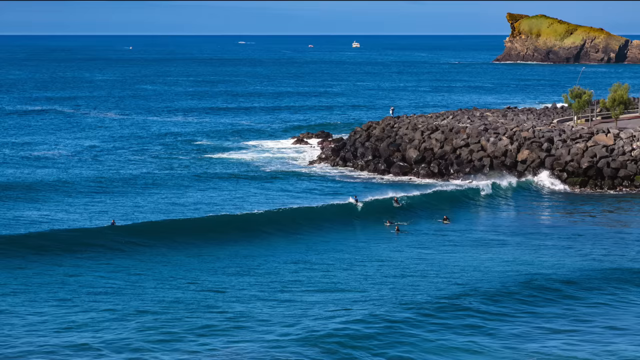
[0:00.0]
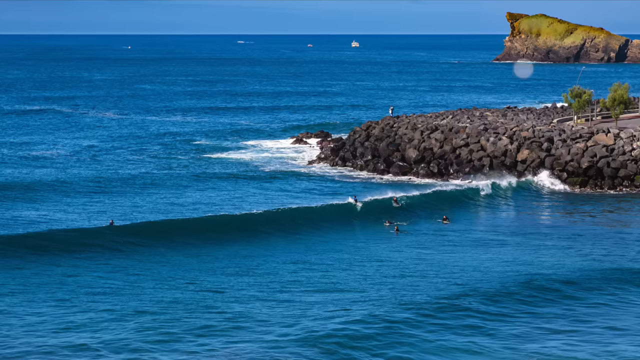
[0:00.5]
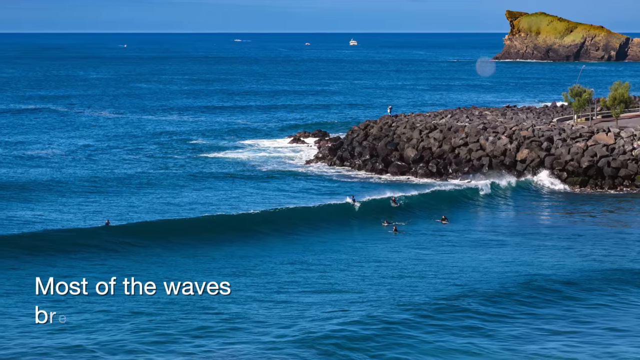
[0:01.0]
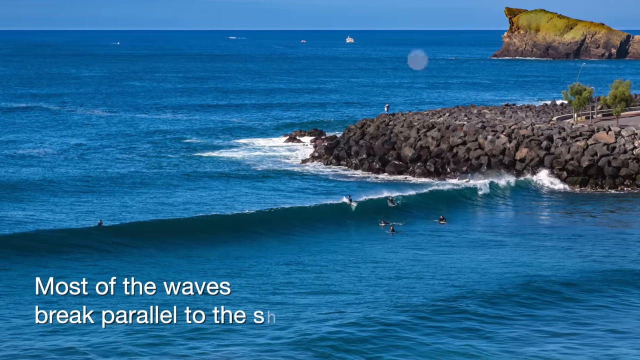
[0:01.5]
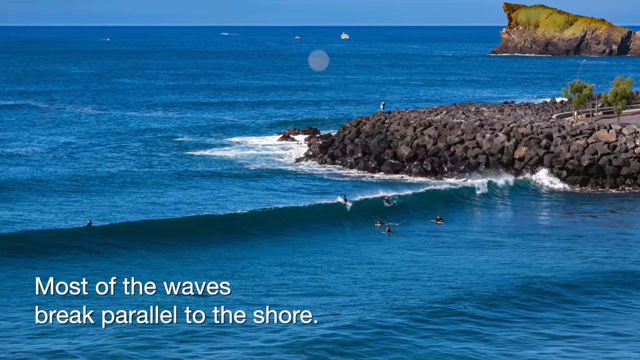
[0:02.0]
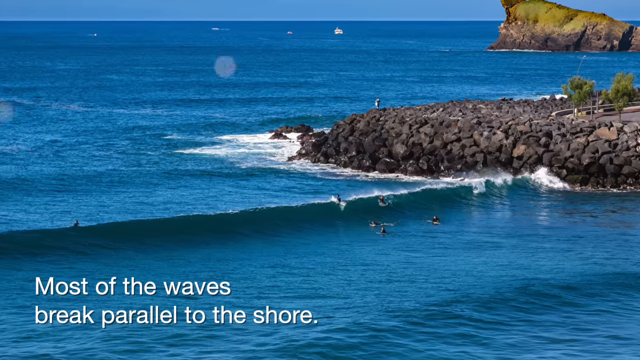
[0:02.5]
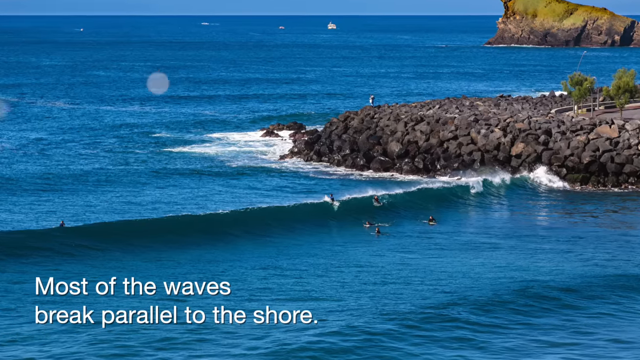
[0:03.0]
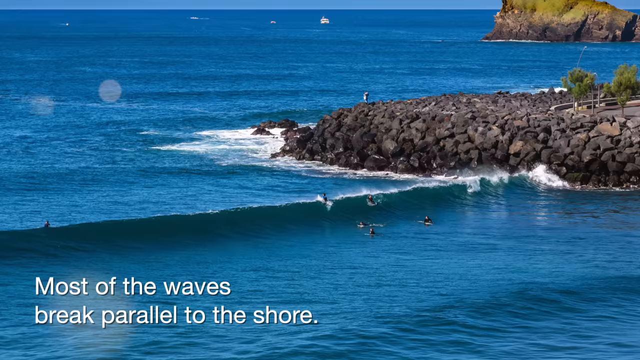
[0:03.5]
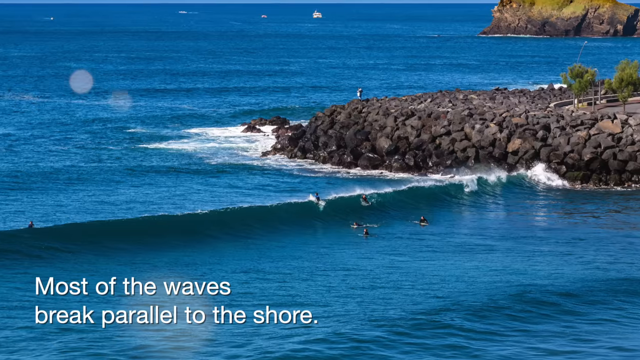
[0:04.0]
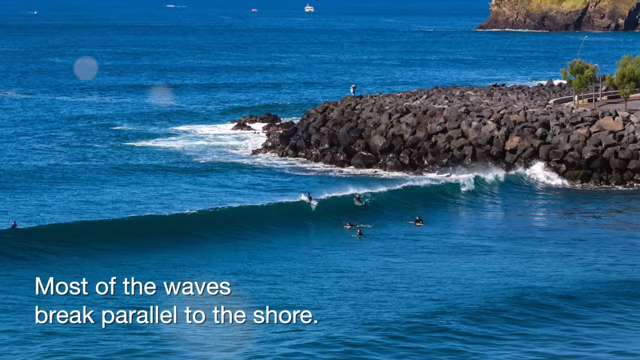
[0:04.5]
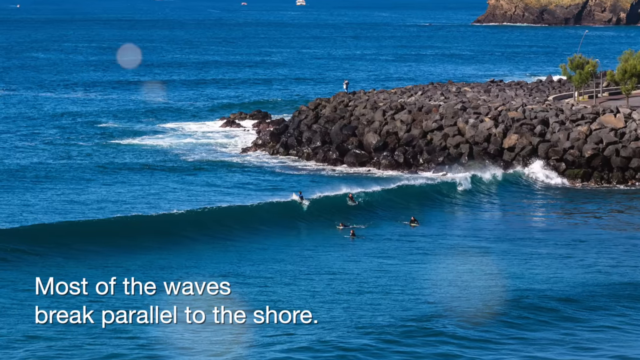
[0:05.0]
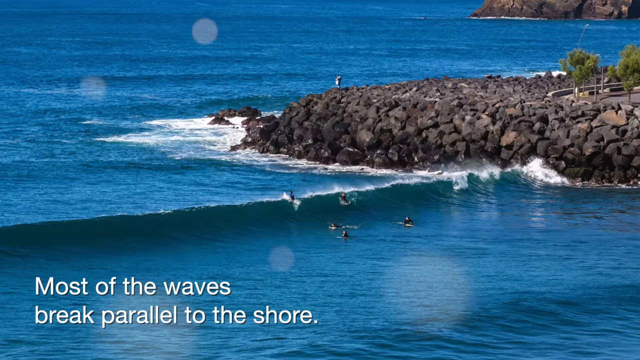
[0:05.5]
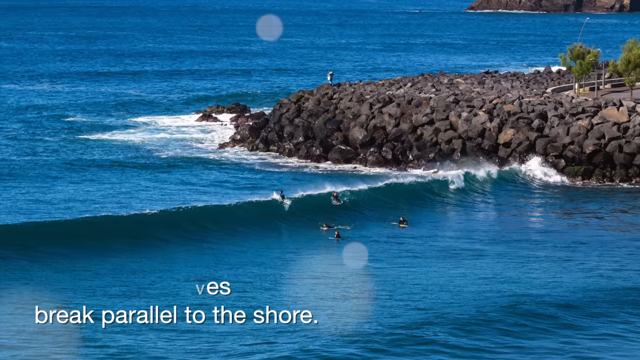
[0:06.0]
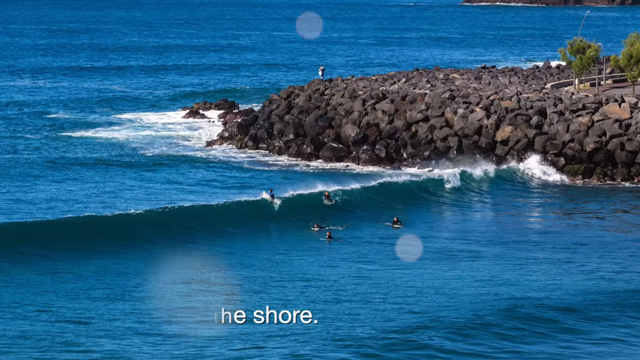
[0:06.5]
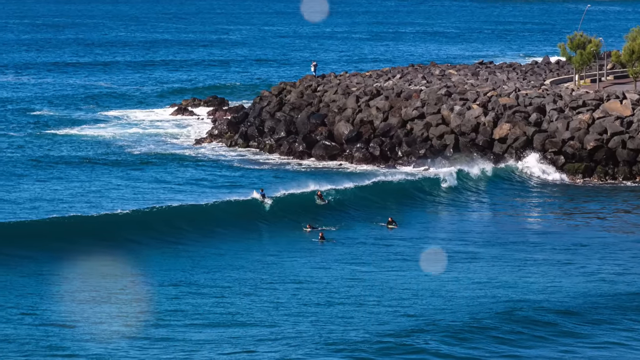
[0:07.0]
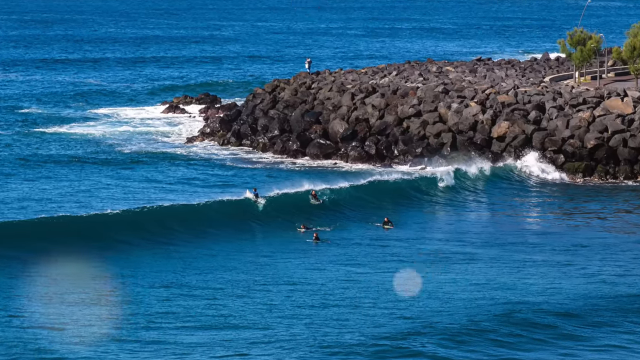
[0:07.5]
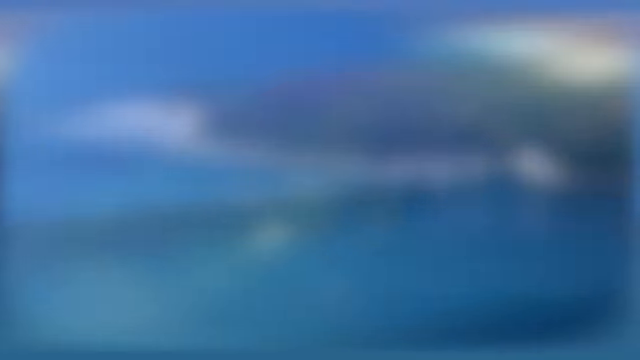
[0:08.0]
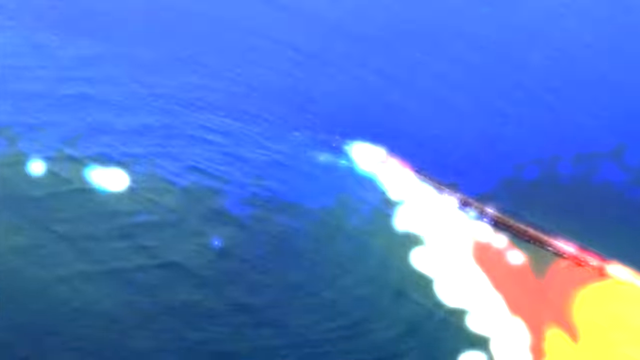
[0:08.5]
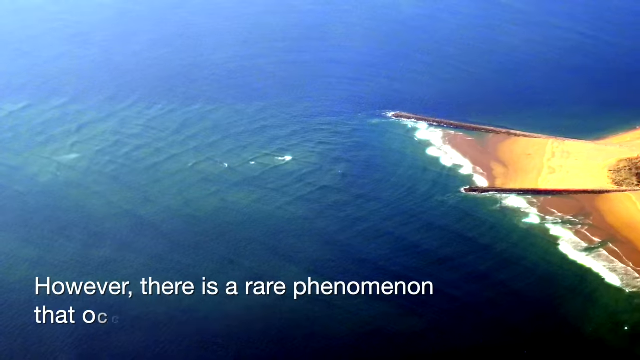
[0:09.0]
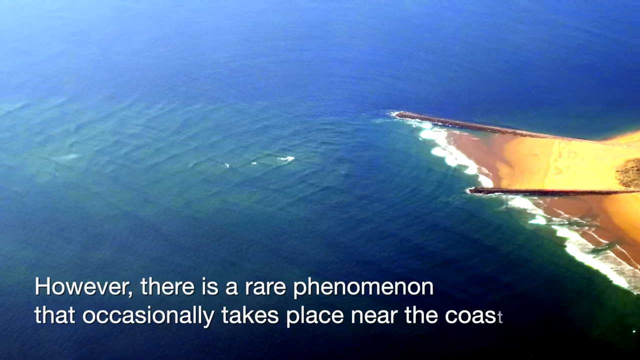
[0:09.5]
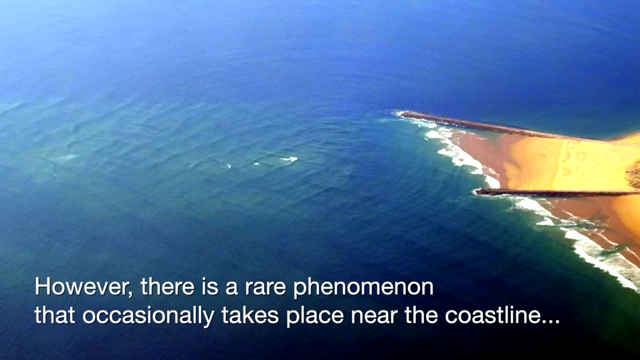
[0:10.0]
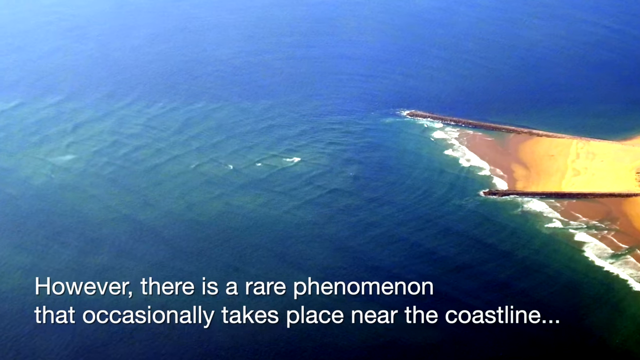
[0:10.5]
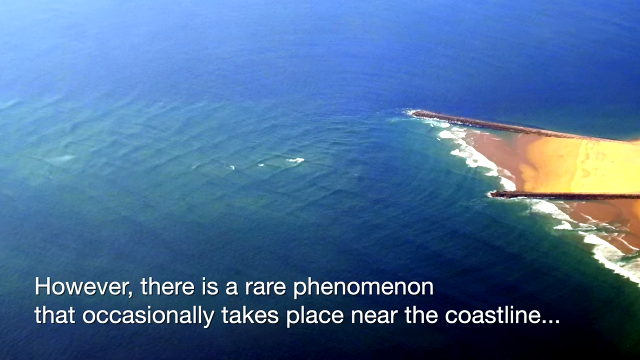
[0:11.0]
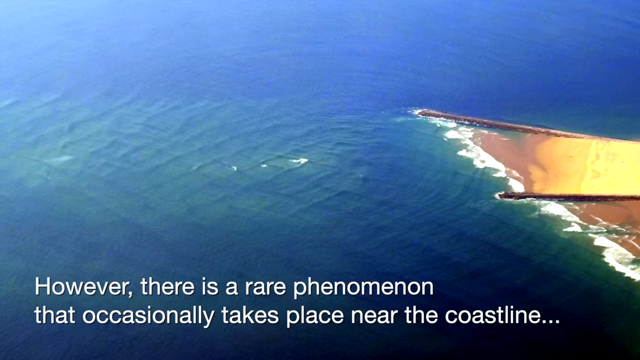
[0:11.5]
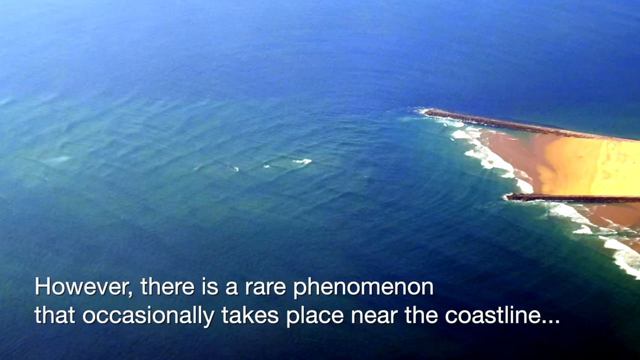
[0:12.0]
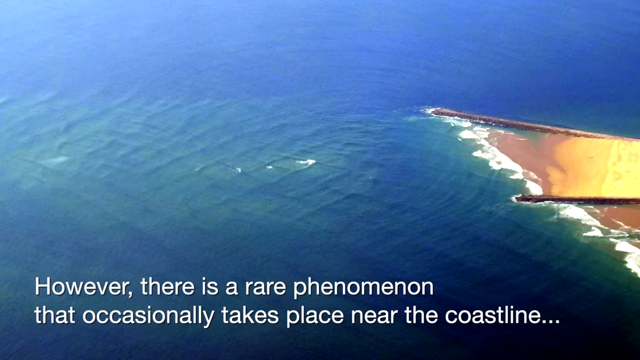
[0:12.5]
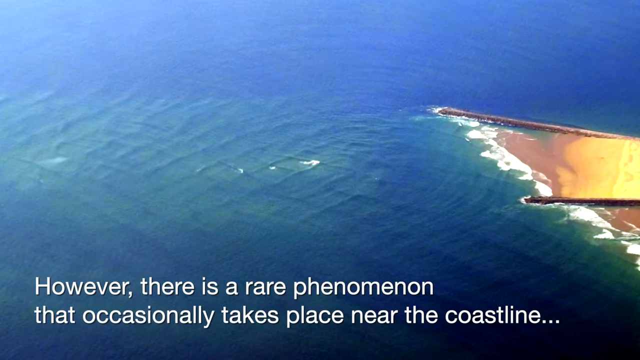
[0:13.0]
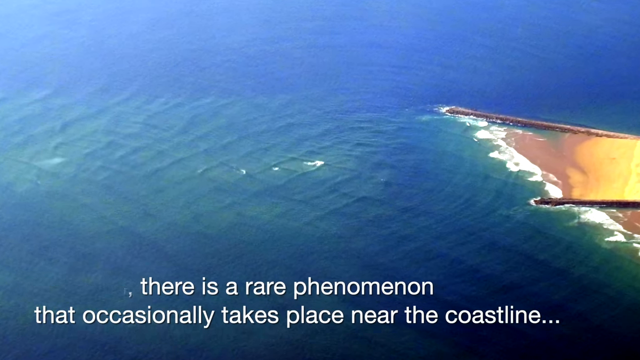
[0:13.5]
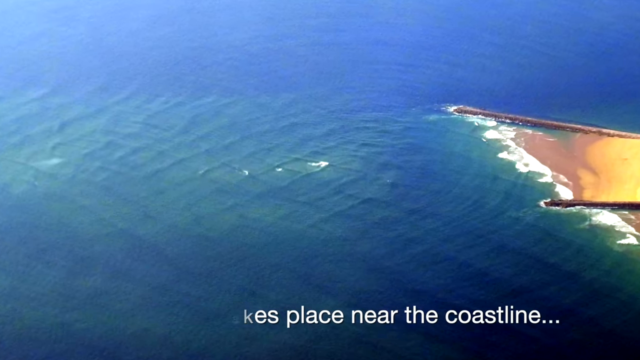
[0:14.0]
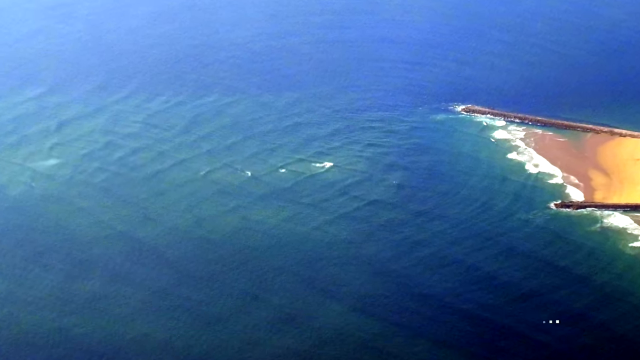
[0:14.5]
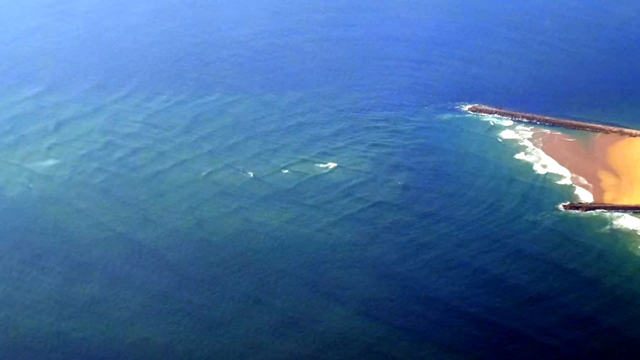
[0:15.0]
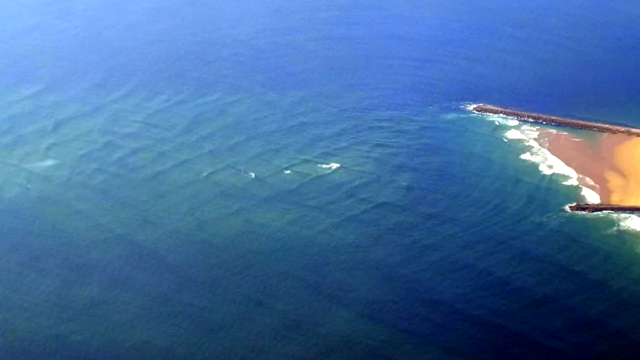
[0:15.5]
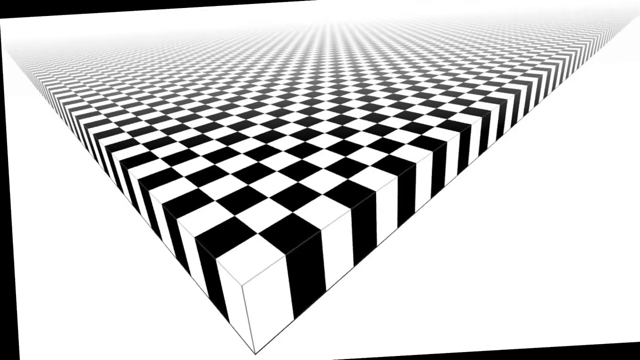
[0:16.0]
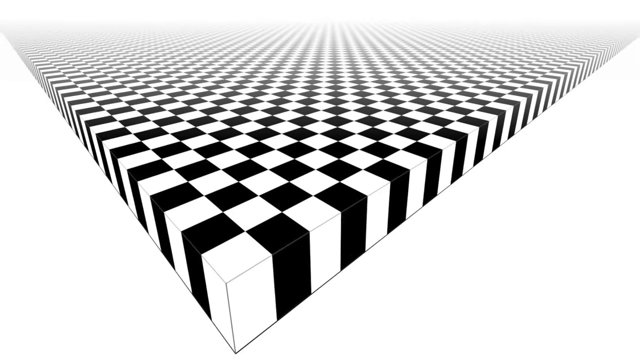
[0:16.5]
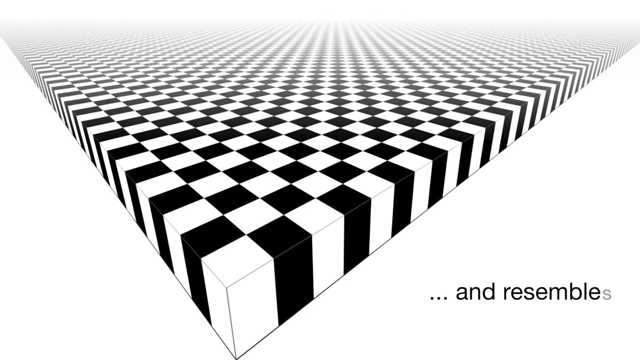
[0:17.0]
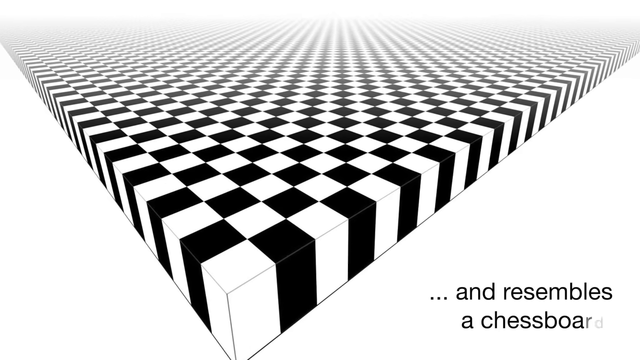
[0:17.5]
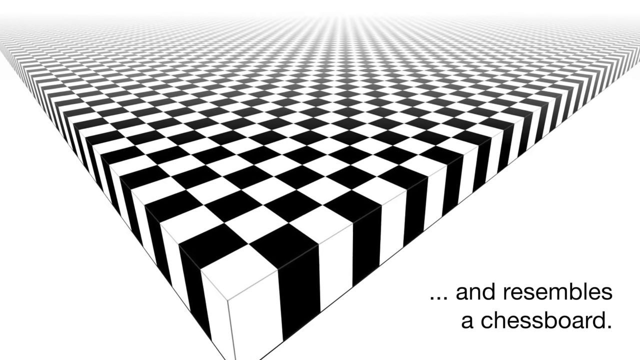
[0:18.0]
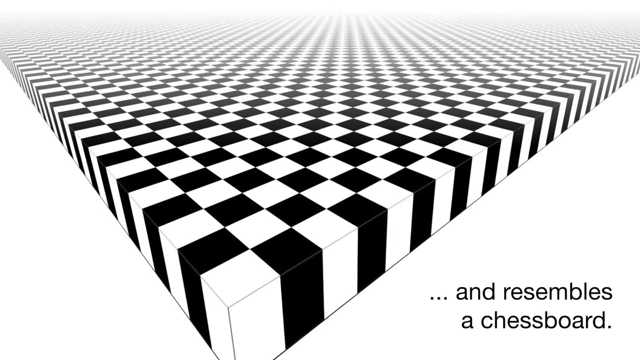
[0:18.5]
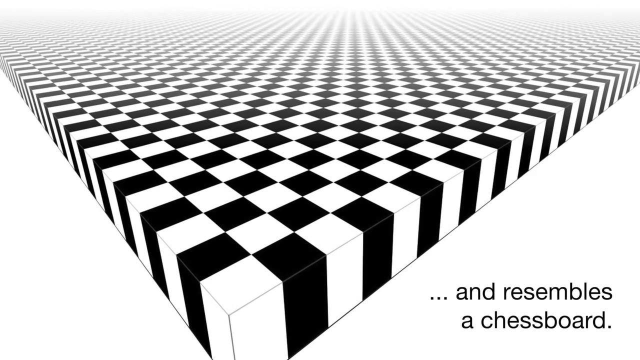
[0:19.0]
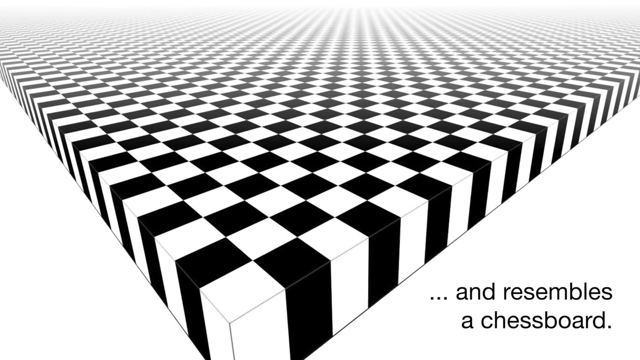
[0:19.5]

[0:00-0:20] An aerial view shows a section of a coastline that is rocky in one part, with a large body of water extending away from it. It is a sunny day, and there is a rock formation in the distance. Only a portion of the waterway is visible. As waves come in, whitecaps form where they crash against the rocks. People are in the water, appearing small because of the distance, though the view of this area of the shore is clear. There are swimmers in the water. Something underwater appears to extend out from a section of the shore; it almost looks like a walkway that was once there. The scene then changes to a black and white checkerboard image on a screen, like a corner of a checkerboard; it is two-dimensional. White text at the top reads "what are square waves?"